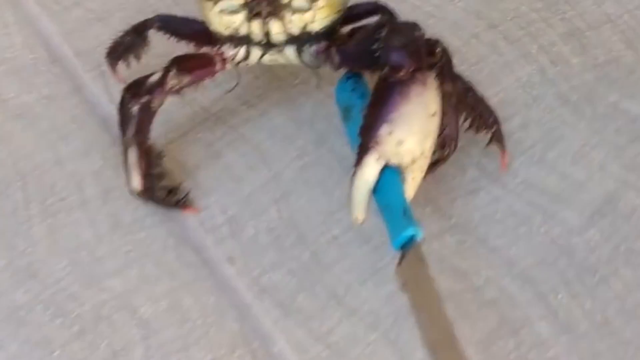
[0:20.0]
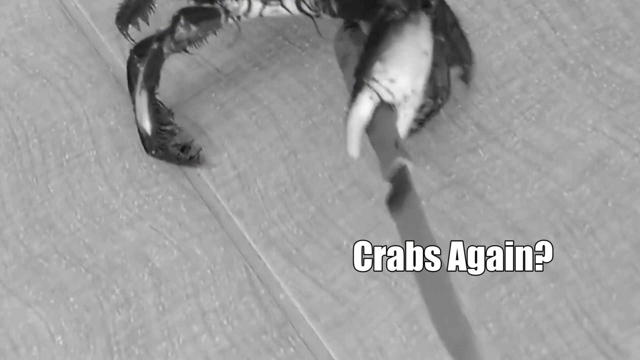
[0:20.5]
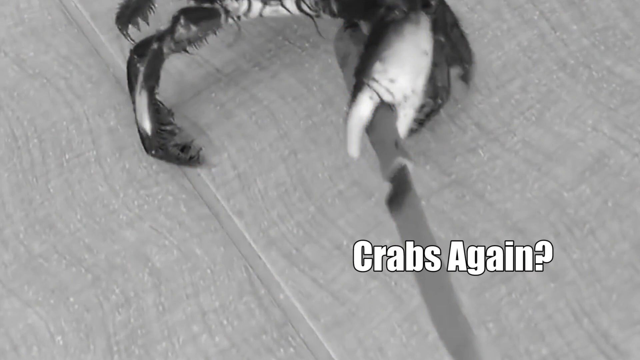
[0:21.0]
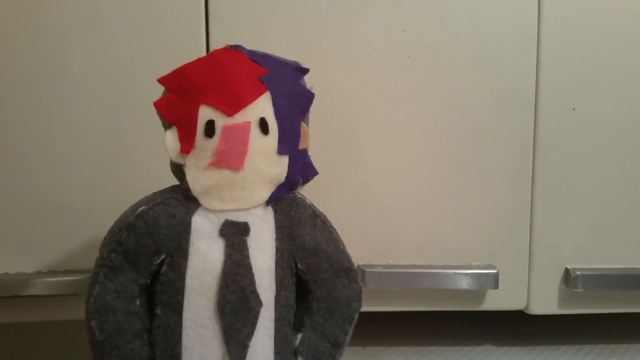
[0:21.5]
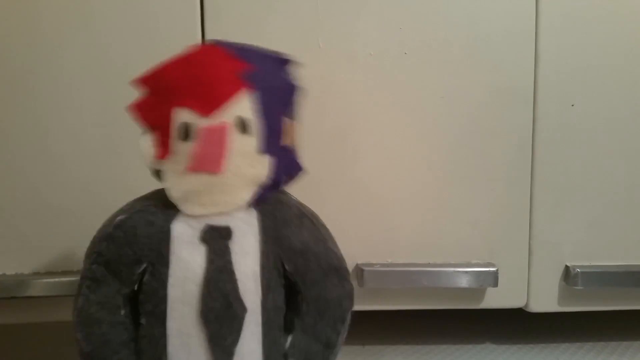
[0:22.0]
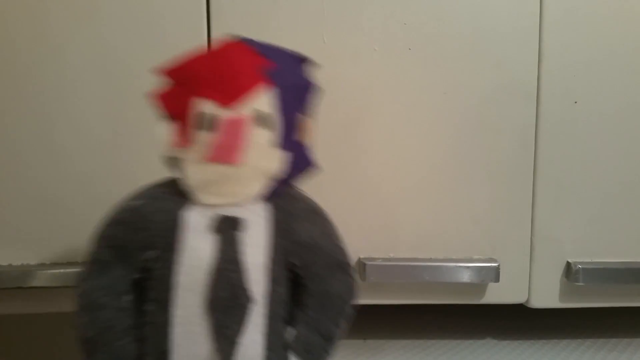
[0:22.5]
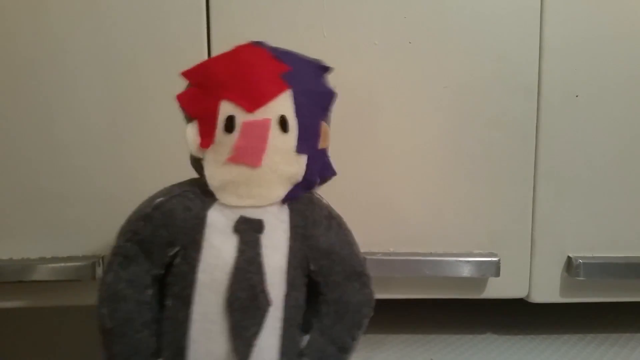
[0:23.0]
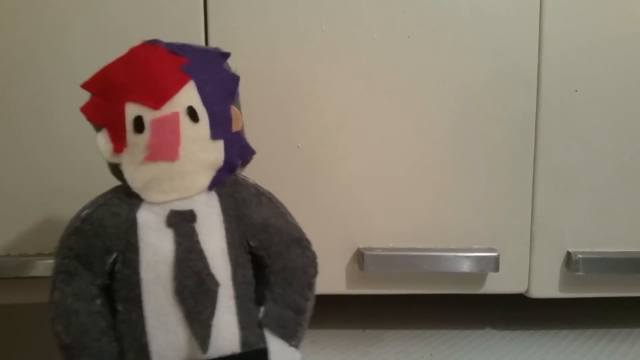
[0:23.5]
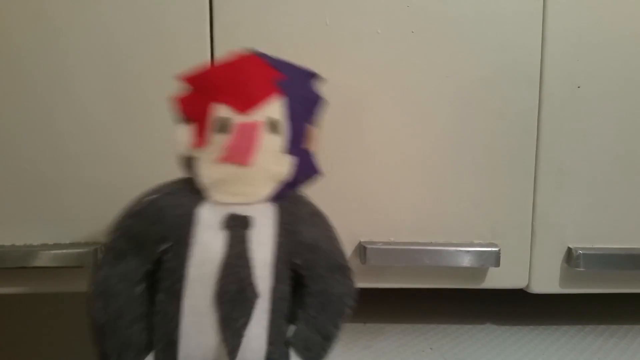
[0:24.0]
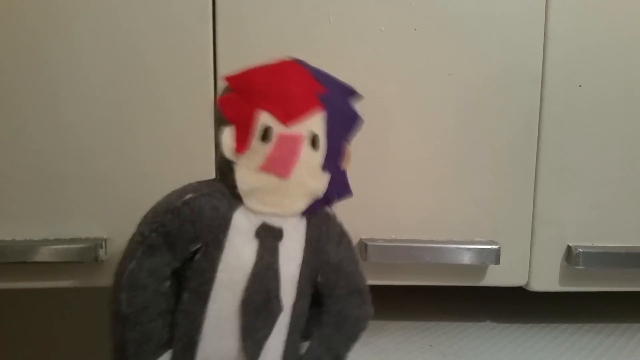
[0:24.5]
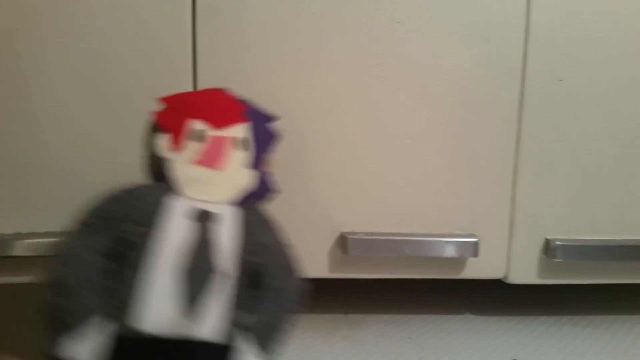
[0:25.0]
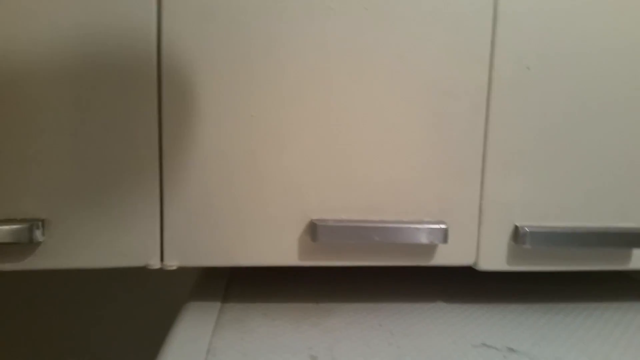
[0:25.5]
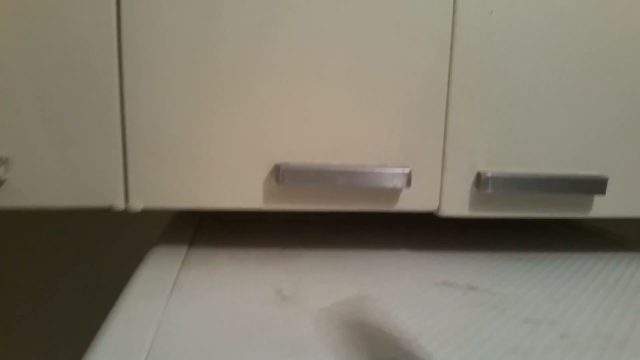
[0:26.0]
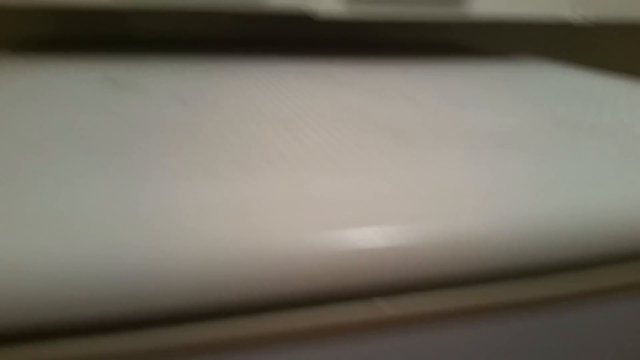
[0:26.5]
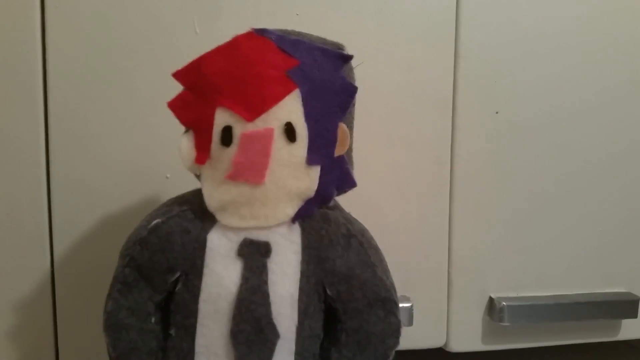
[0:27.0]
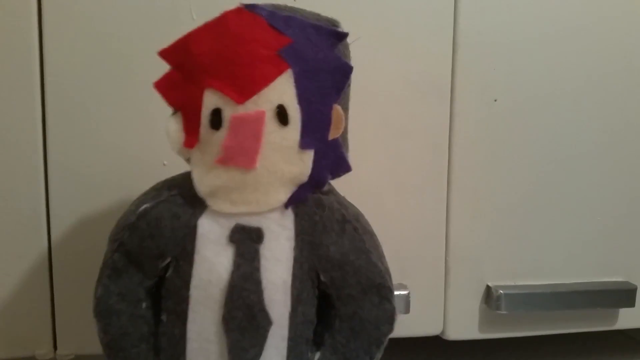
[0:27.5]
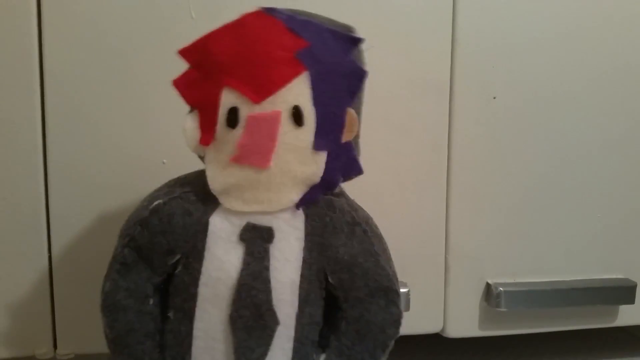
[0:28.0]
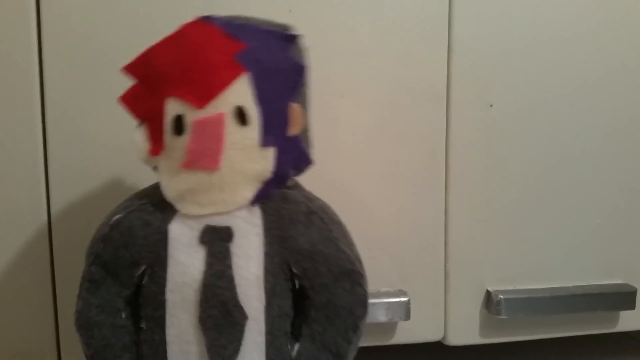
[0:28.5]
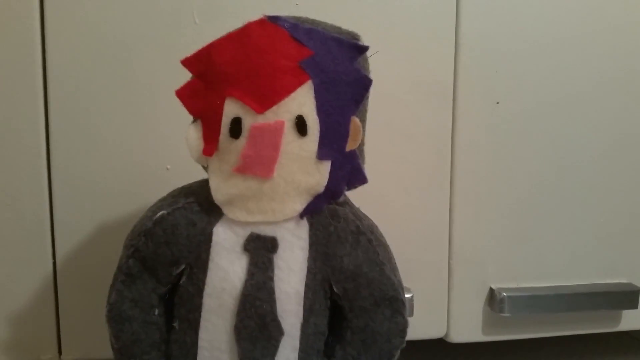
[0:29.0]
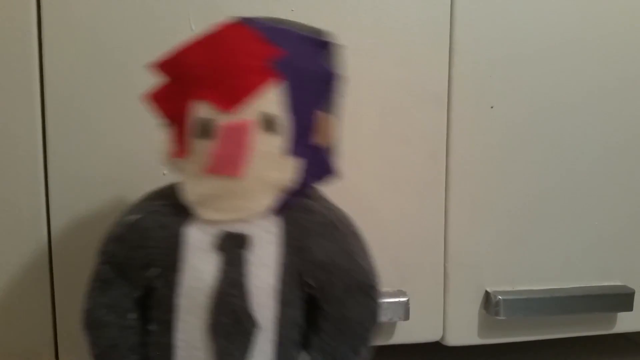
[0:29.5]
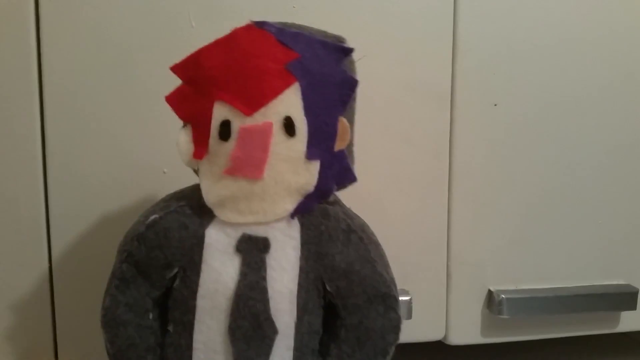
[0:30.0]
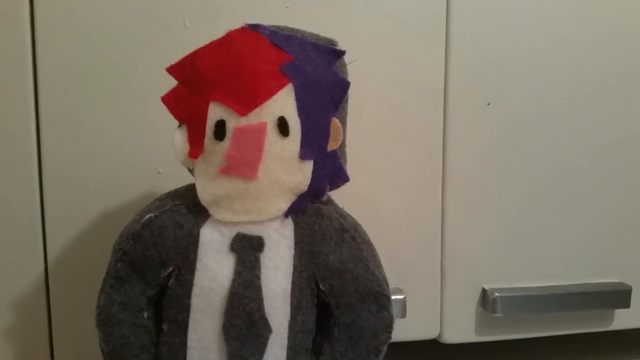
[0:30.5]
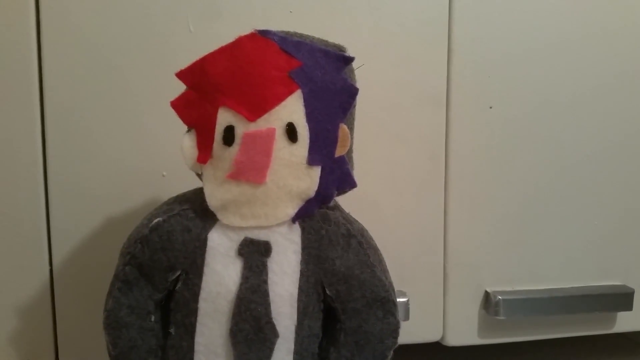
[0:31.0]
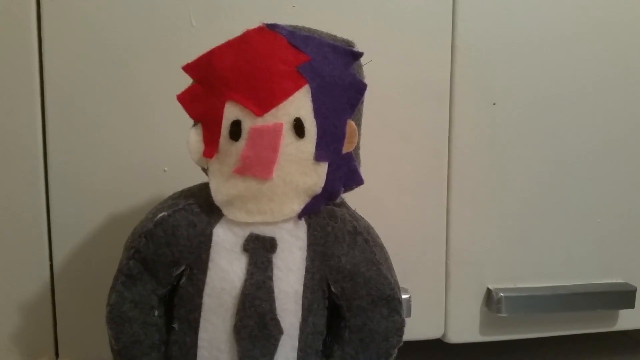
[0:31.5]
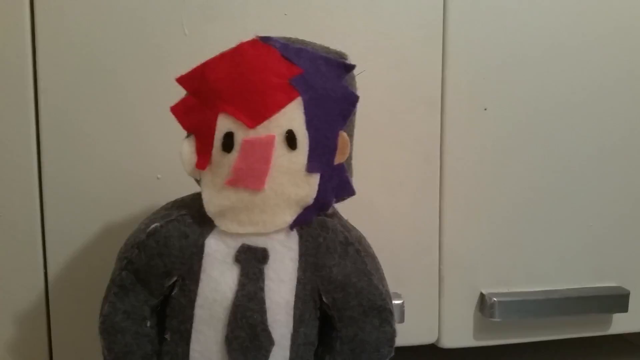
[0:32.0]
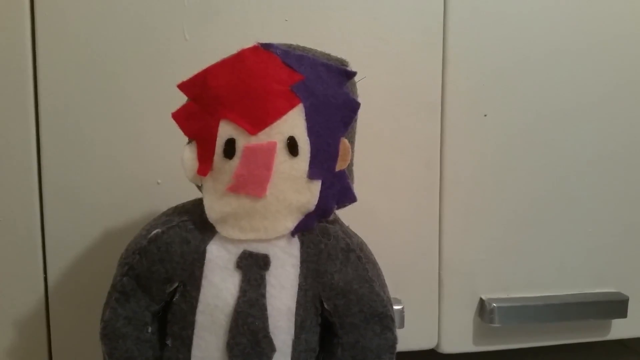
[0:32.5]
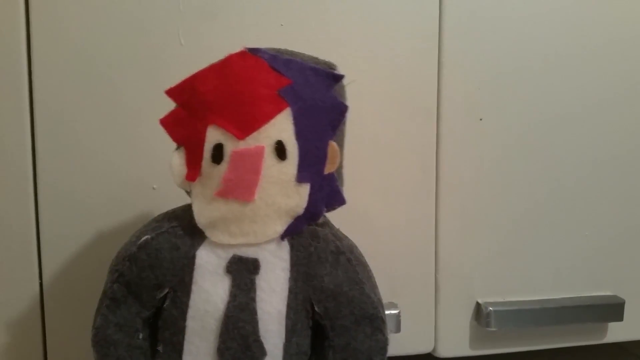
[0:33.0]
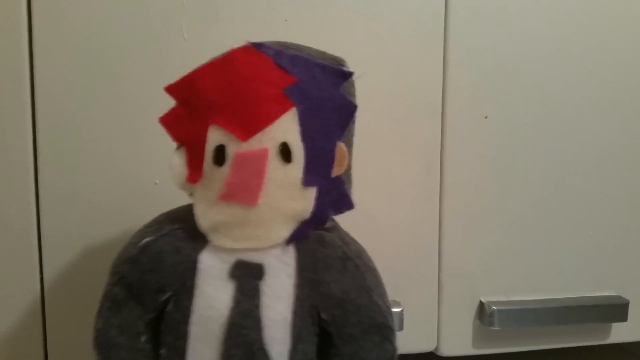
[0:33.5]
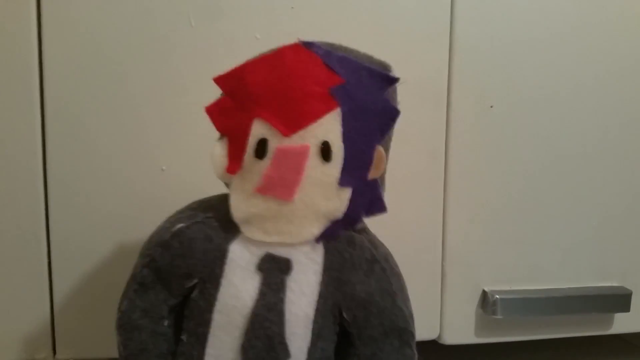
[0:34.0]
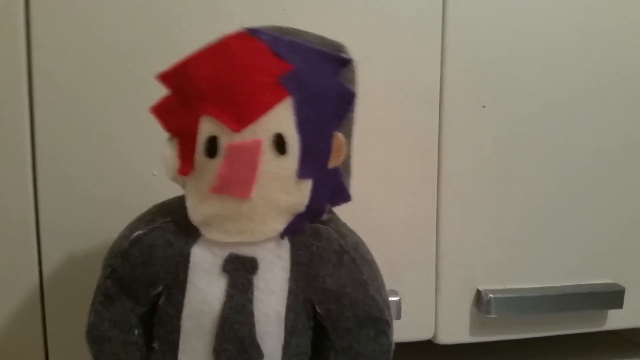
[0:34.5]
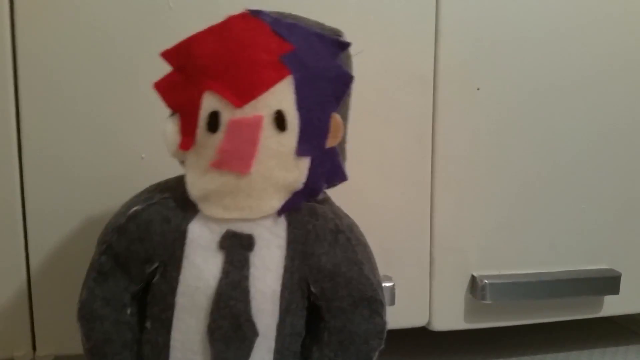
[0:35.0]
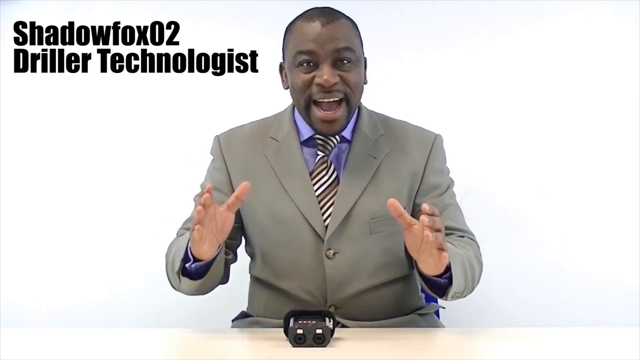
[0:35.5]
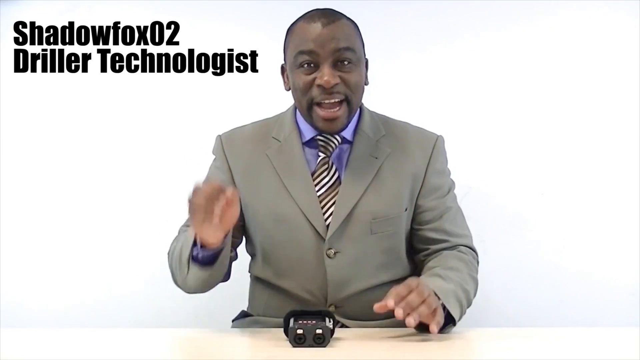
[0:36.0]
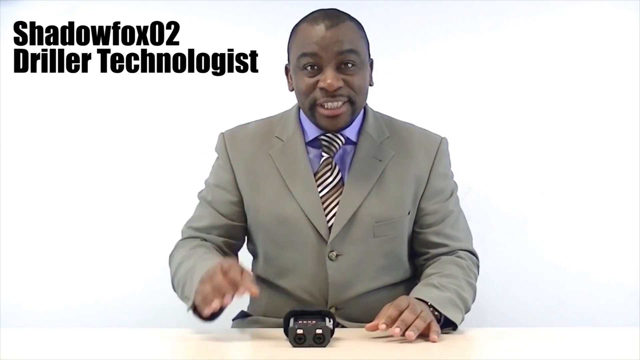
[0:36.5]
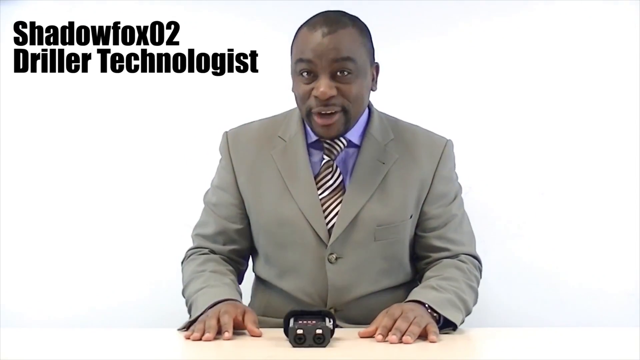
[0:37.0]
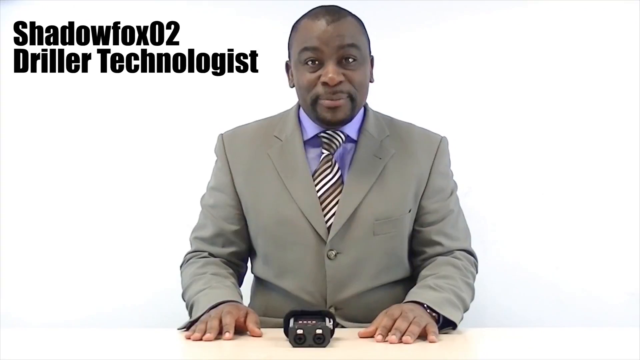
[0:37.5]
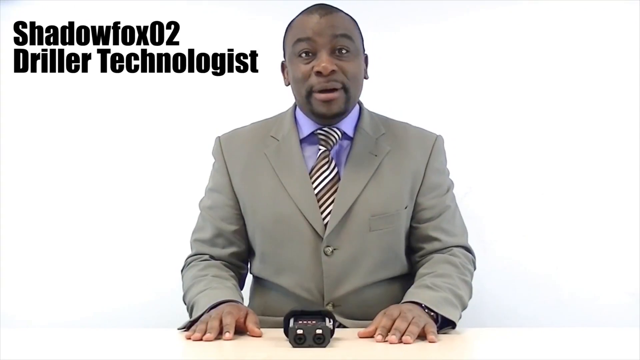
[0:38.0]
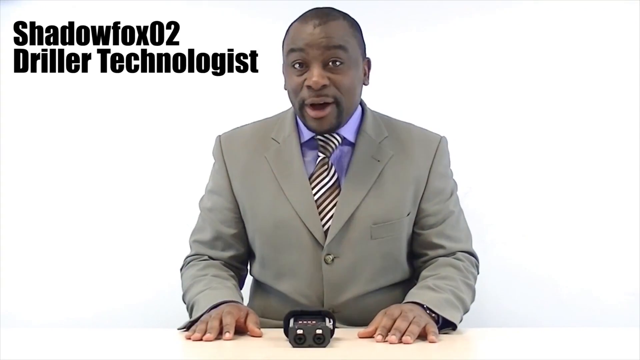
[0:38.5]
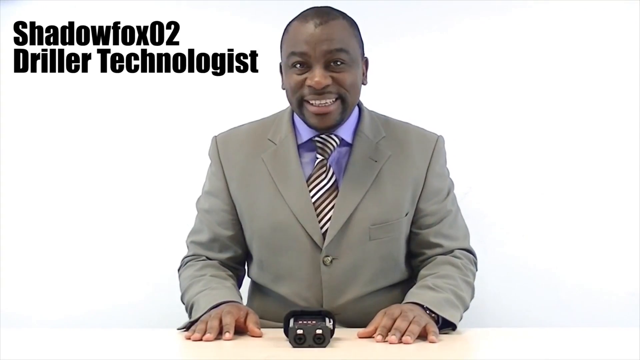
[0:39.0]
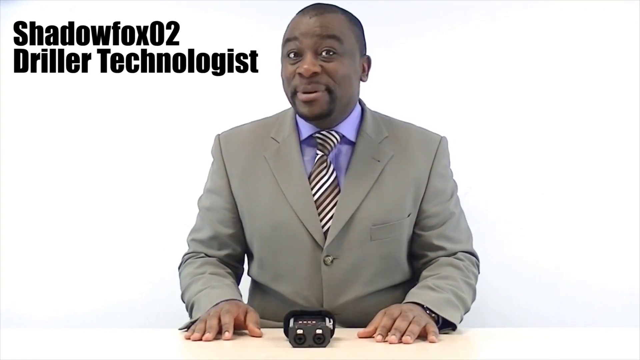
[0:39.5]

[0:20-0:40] The crab on the slate floor is shown holding the knife more directly toward the camera, and the bigger claw holding the knife also has a creamy white underside. Everything then goes black and white; the crab is still visible, and white text reads "crabs" with a question mark at the end. Next comes a shot of the red-haired man in the suit, this time looking like a little cloth or felt doll. He seems to be standing next to a wall that maybe has metal bars on it; he shakes and jerks around a little, jumps in the air and disappears, then appears jumping around and wiggling. The scene changes completely to a black man in a grayish-tan suit, a black, white and silver striped tie and a purple button-up shirt, with very short hair. He makes gestures with his right hand and says something enthusiastically. To his left, black bold text reads "shadow fox zero two driller technologist". He points his finger at the screen for a moment, like holding up a number one. There seems to be some sort of device in front of him.